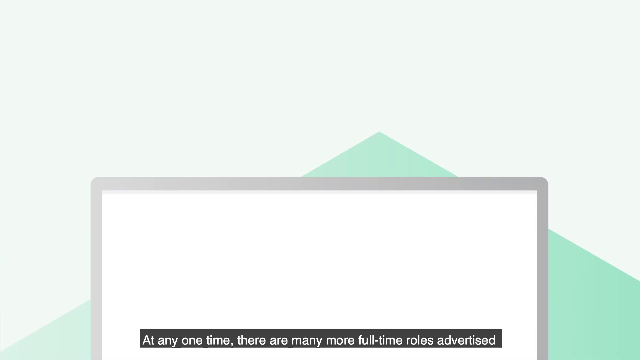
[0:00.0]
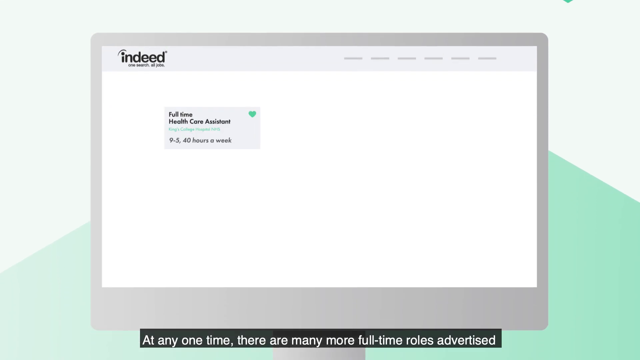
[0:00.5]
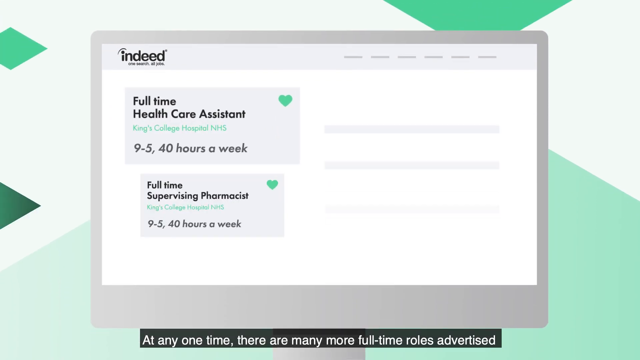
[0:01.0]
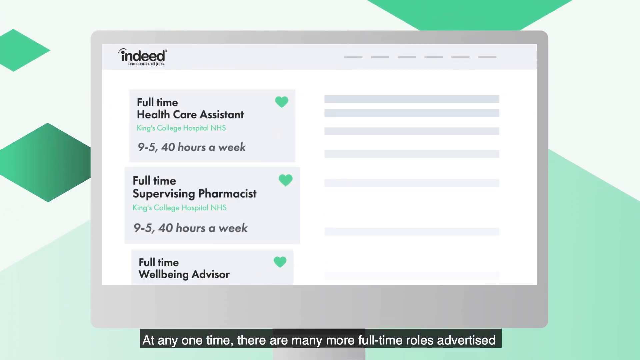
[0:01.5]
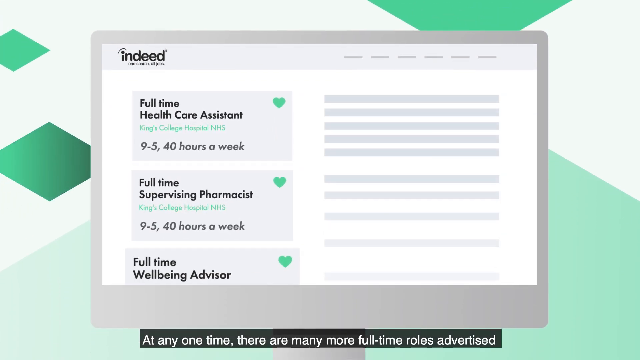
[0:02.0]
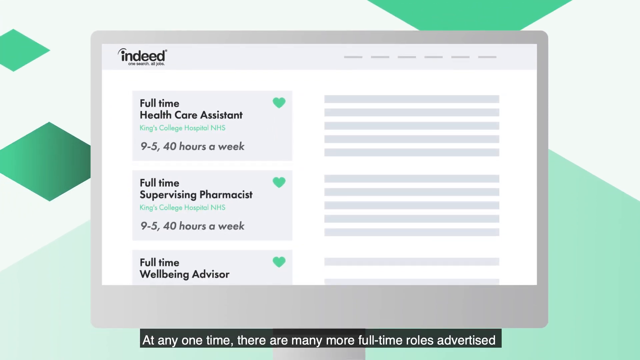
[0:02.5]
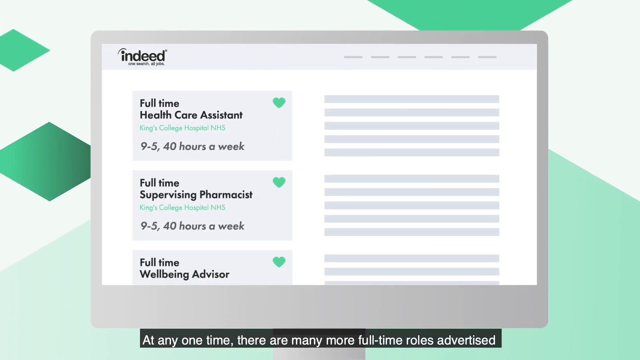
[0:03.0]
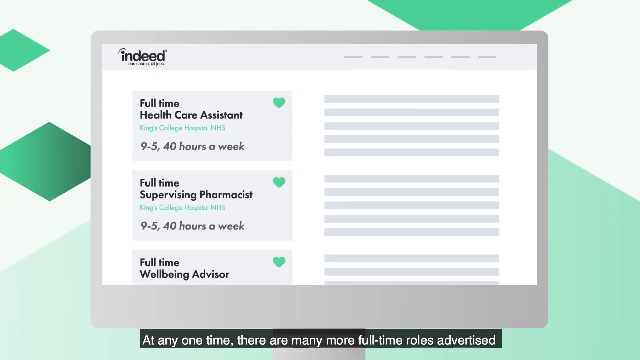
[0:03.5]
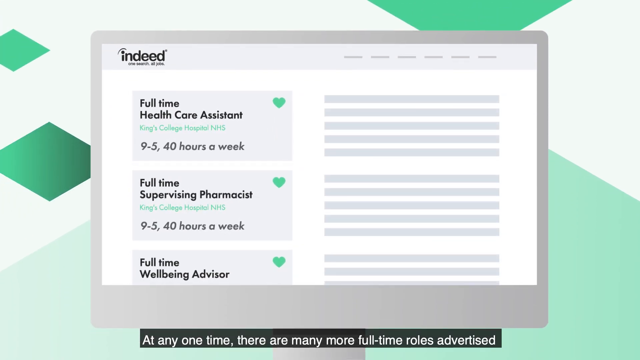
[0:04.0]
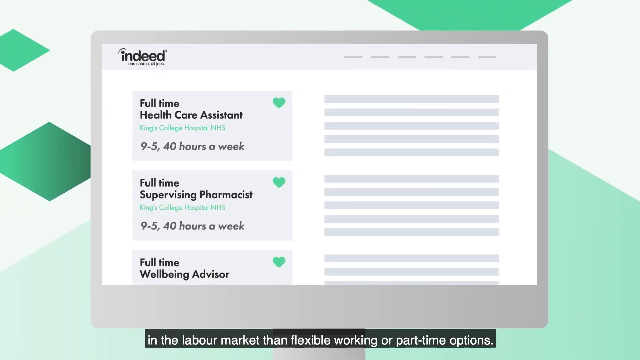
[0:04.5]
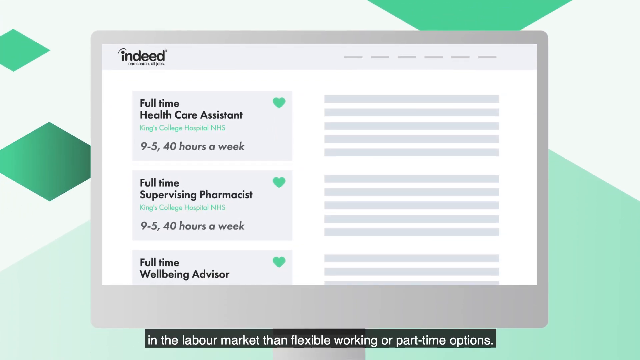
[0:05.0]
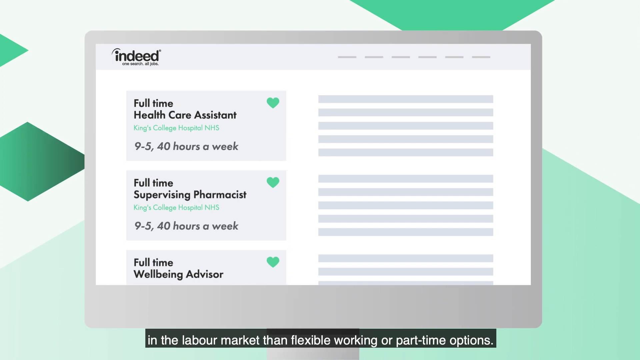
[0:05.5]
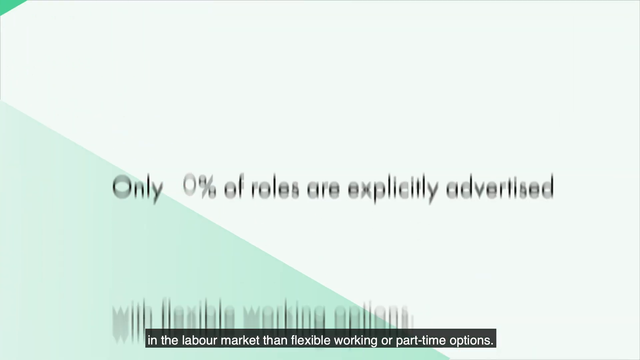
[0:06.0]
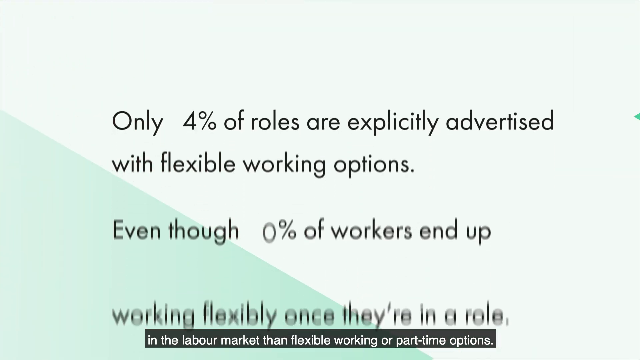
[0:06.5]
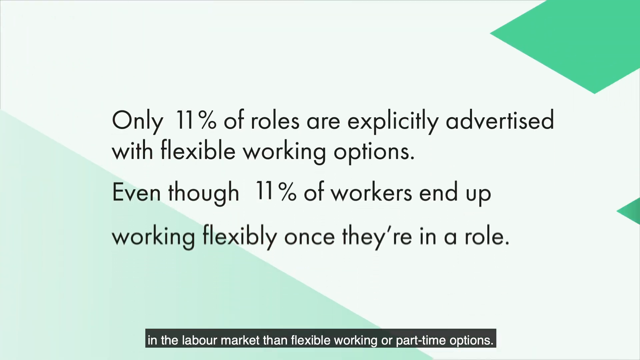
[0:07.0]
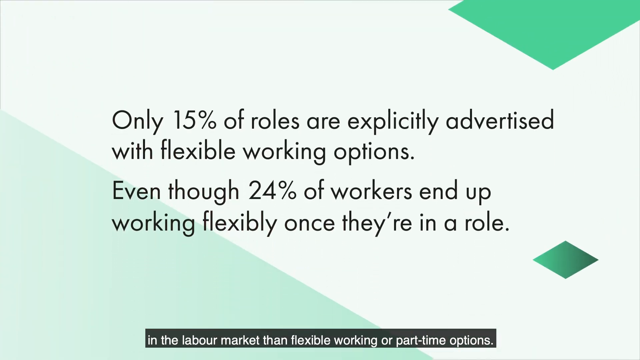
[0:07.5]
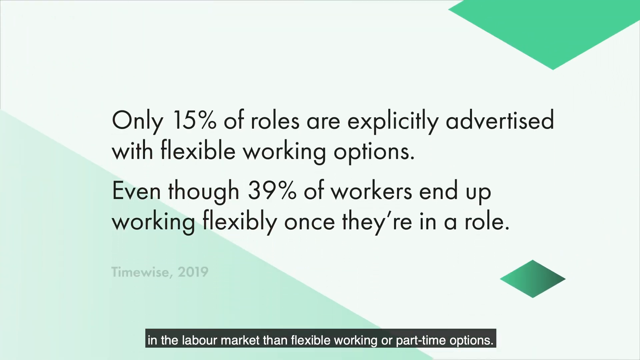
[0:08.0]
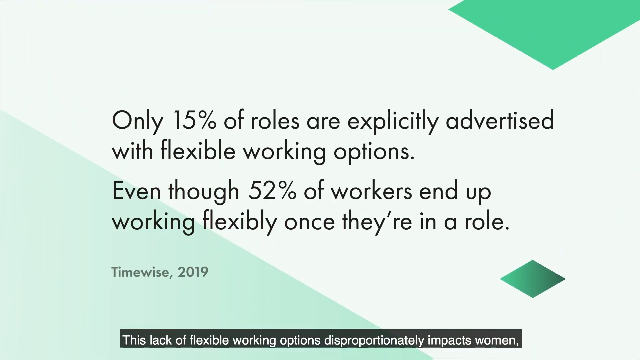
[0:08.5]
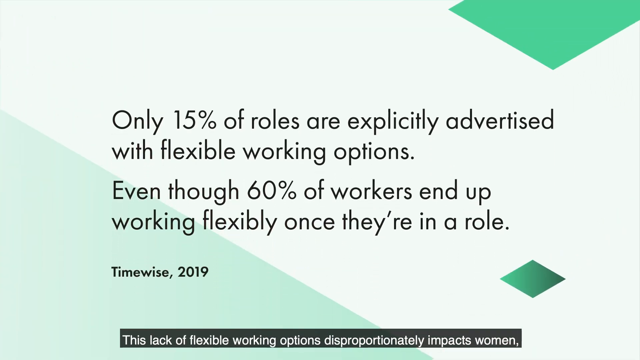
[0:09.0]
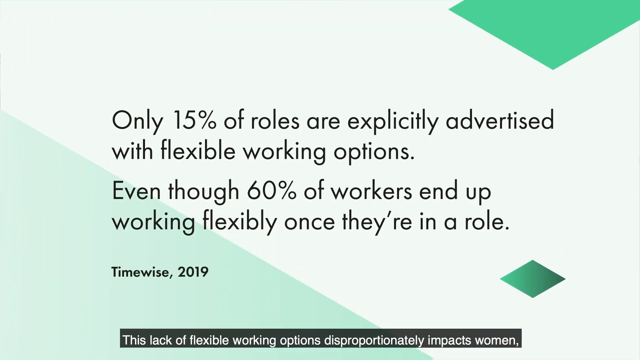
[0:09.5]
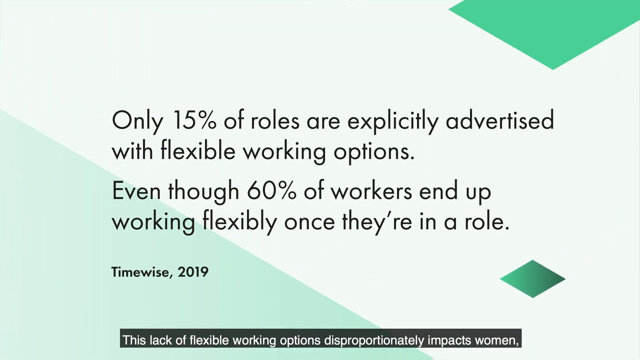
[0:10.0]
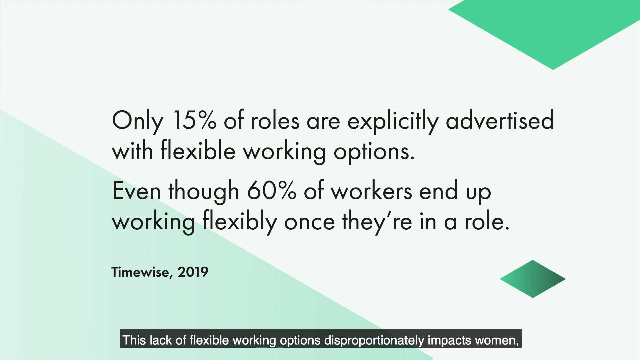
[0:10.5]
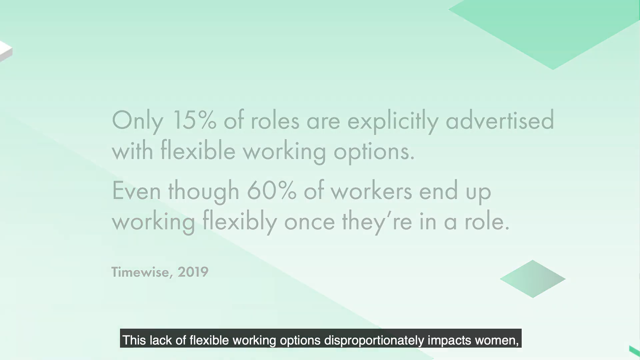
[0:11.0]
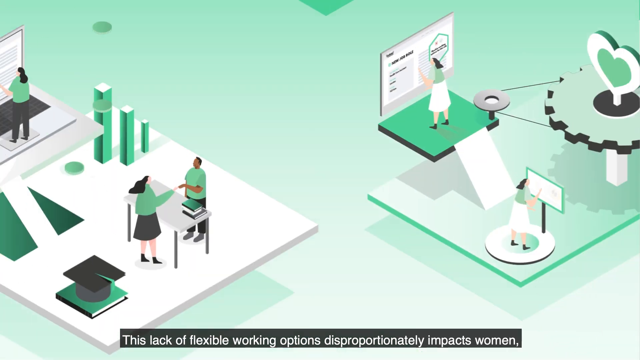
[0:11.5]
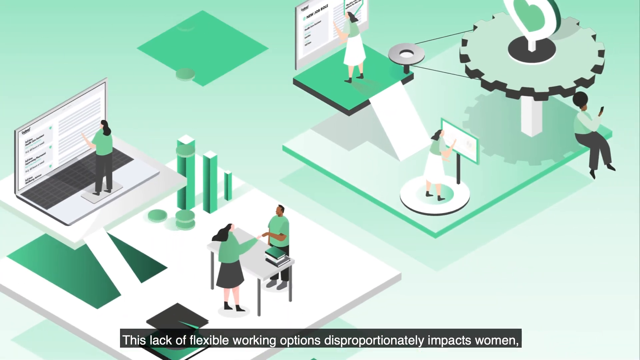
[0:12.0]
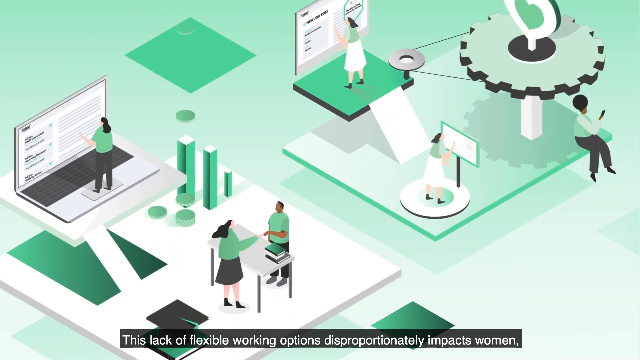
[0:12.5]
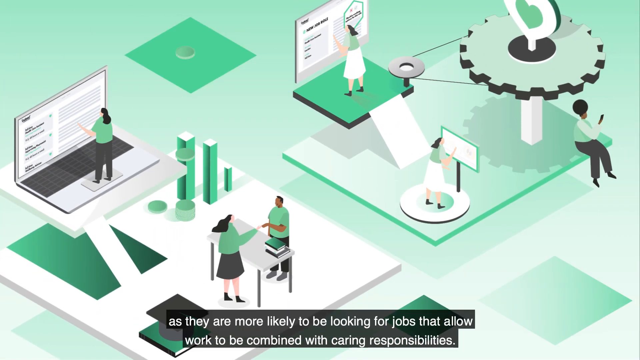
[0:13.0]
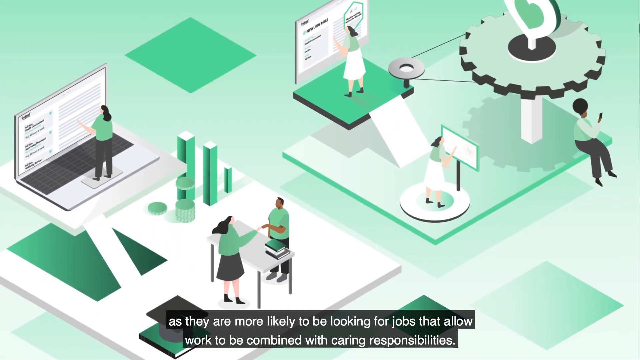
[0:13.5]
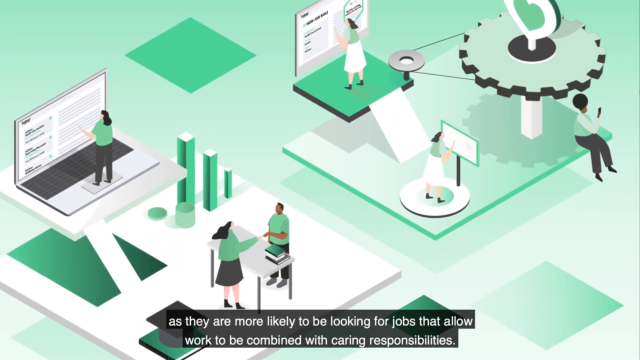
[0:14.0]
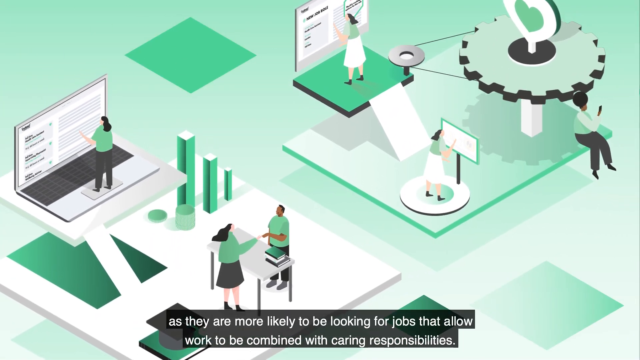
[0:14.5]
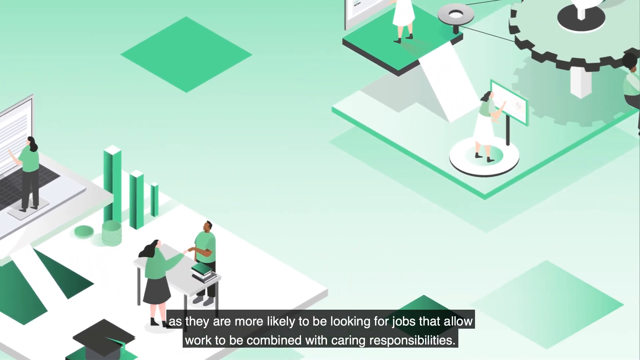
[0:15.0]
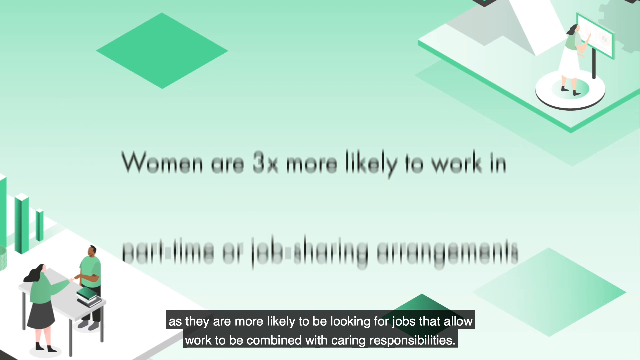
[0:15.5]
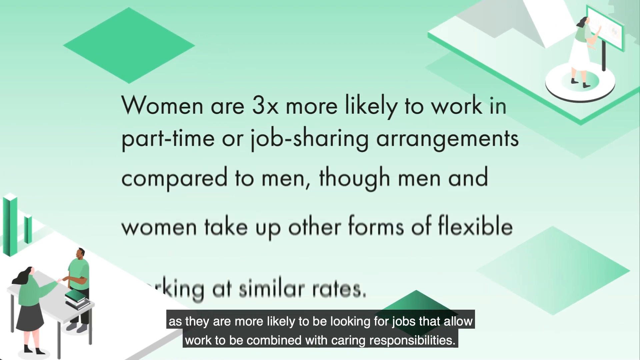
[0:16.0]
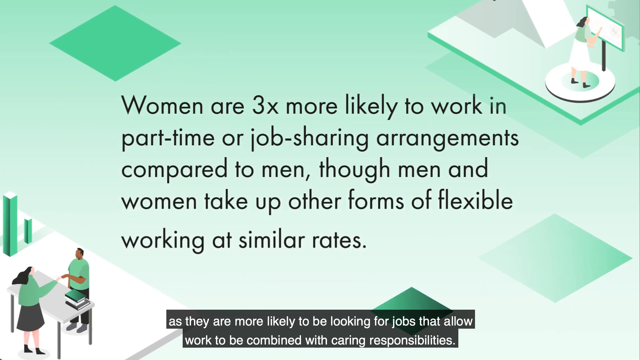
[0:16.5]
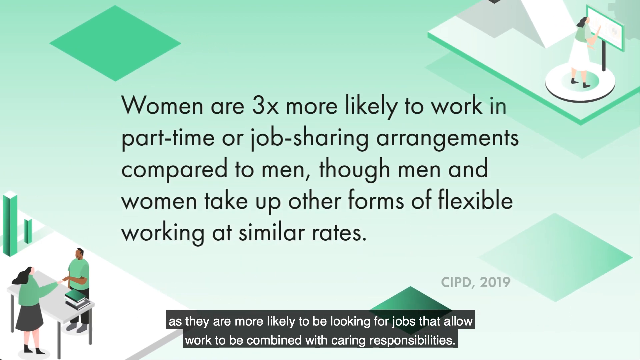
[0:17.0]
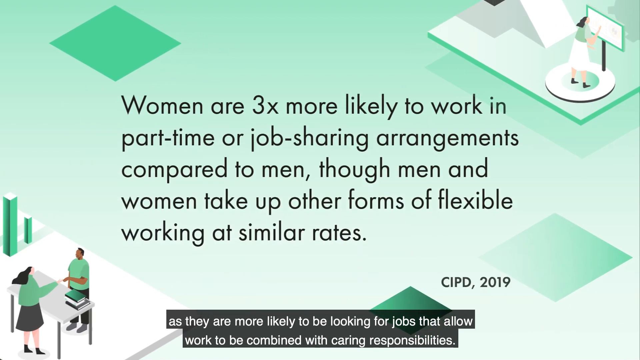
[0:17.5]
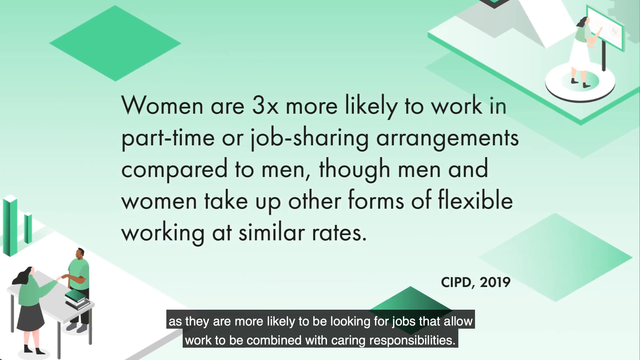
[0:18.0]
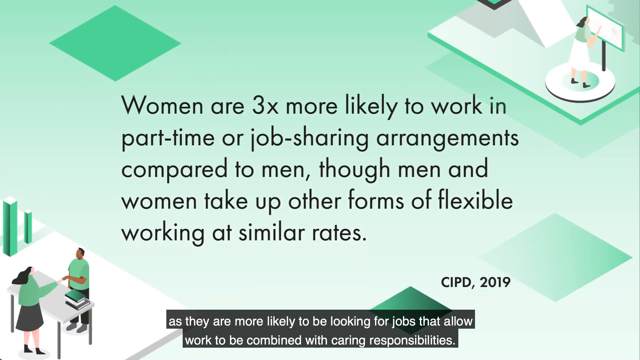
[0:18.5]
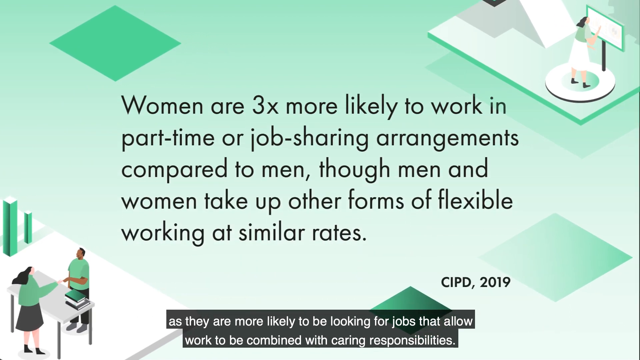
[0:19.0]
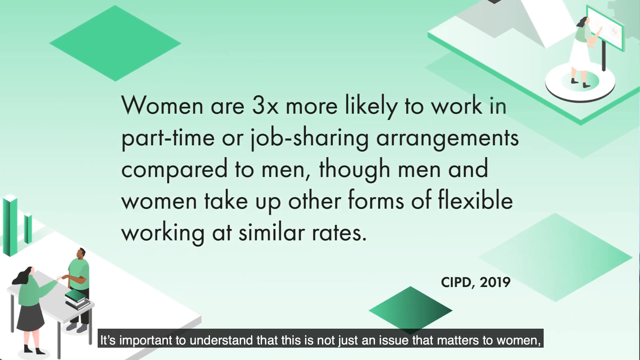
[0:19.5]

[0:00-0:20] This is an ad. It opens with a green and gray background, and a small simulated laptop pops into view with "Indeed" on it. On the left side of the fake laptop screen are fake job listings: "full-time health care assistant, 9 to 5, 40 hours a week, full-time supervising pharmacist, 9 to 5, 40 hours a week, full-time well-being advisor" and so on. Further to the right, the listings have green hearts by them. Green graphics are visible behind the simulated laptop. Black text comes up in the center of the screen: "only 13% of roles are explicitly advertised with flexible working options, even though 15% of workers end up working flexibly once they're in a role." The text moves upward and apparently now reads "even though 60% of workers end up working flexibly once they're in a role," with the attribution "timewise, 2019" beneath it. The video moves to small cartoon graphics of people in green shirts: a woman standing on the trackpad of a laptop, another in front of a giant digital board, small gears, hearts, different people and small charts. Text then reads "women are three times more likely to work part-time or job-sharing arrangements compared to men, though men and women take up other forms of flexible working at similar rates. CIPD, 2019." Very briefly, the video cuts to a blonde woman with glasses in a floral shirt.